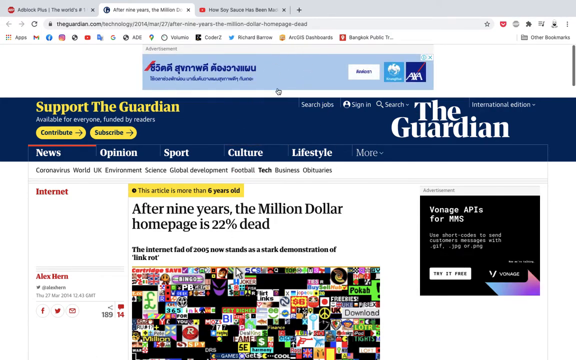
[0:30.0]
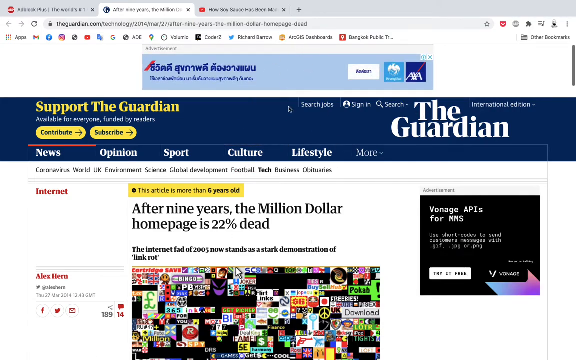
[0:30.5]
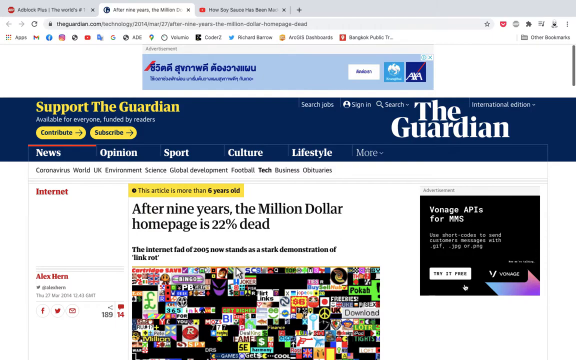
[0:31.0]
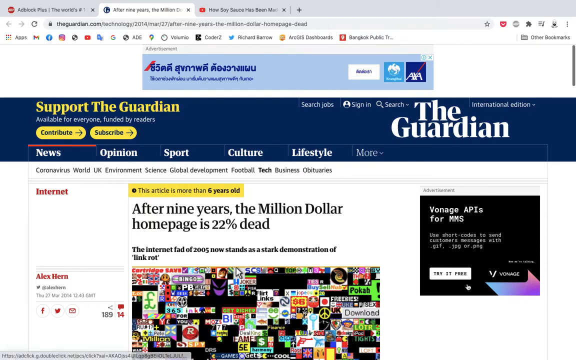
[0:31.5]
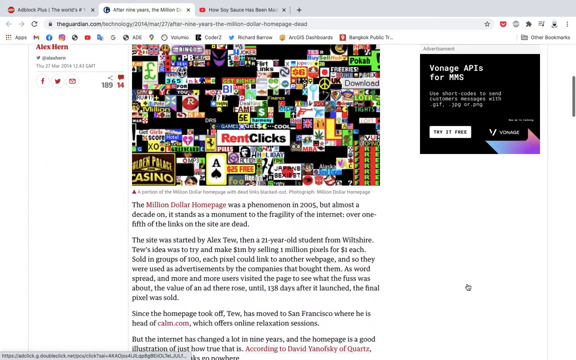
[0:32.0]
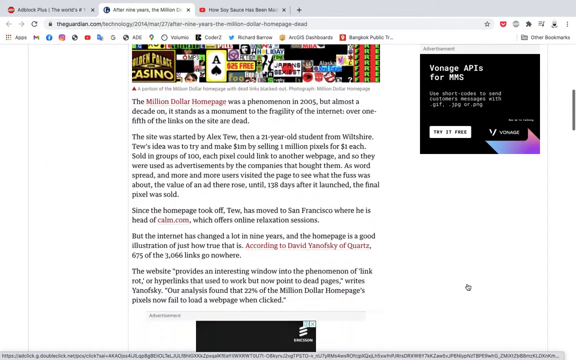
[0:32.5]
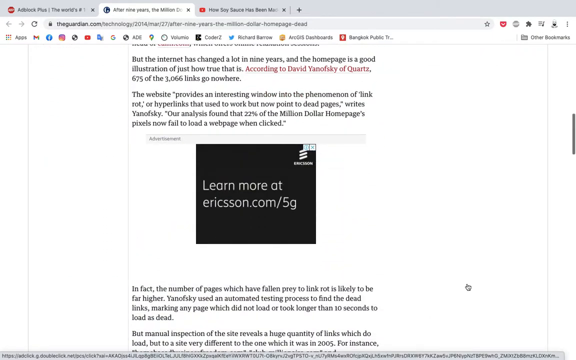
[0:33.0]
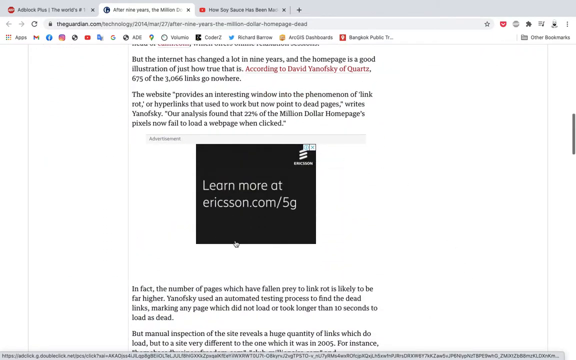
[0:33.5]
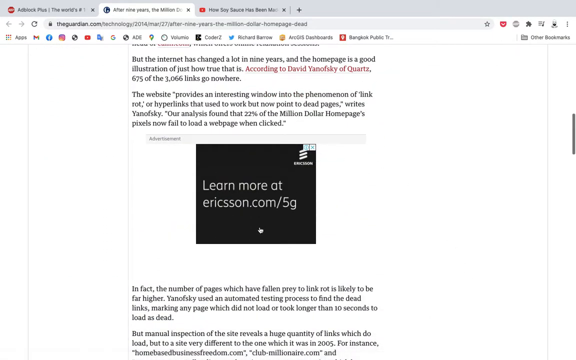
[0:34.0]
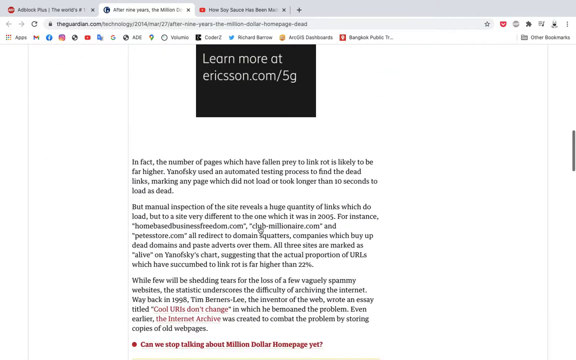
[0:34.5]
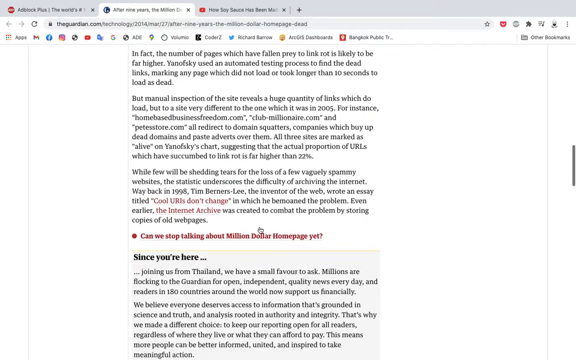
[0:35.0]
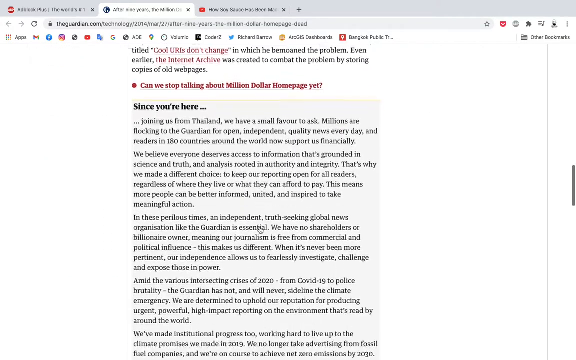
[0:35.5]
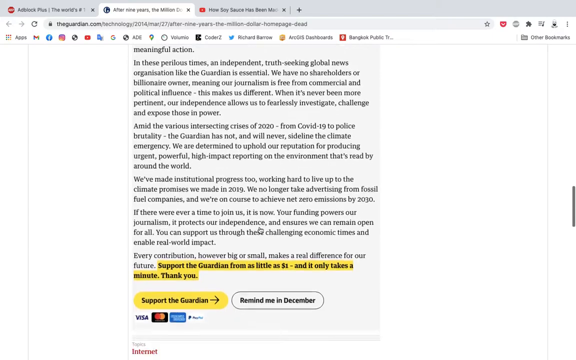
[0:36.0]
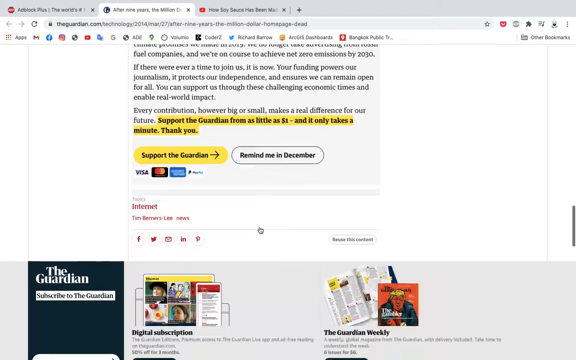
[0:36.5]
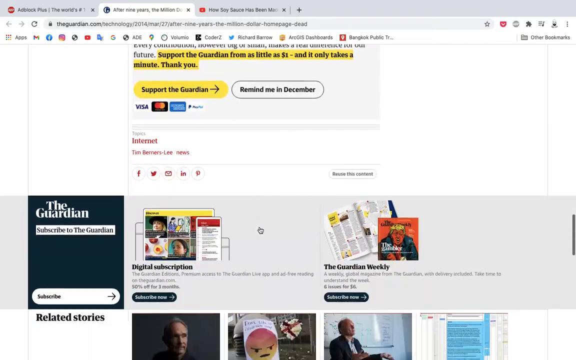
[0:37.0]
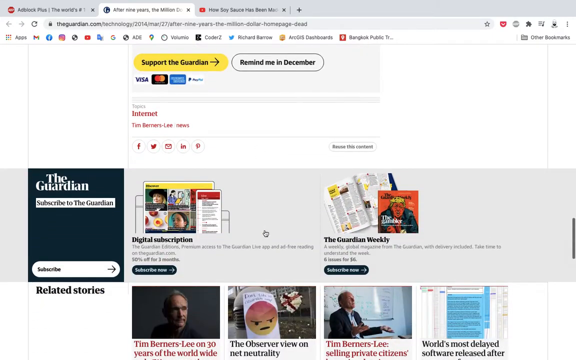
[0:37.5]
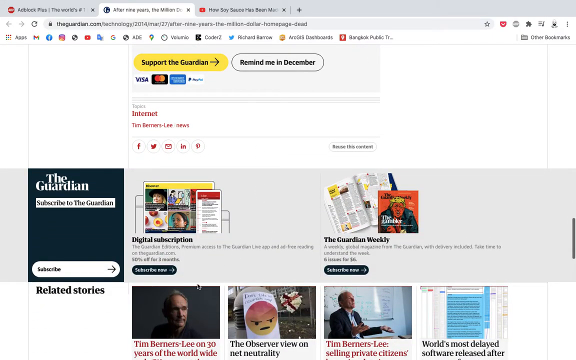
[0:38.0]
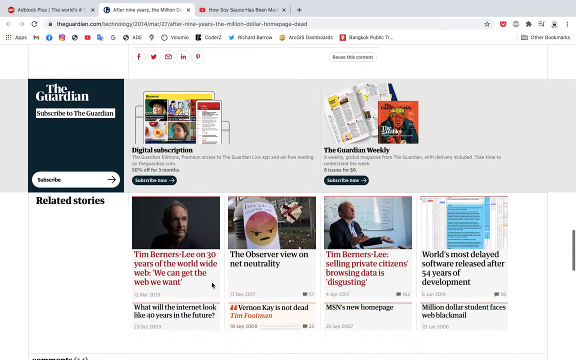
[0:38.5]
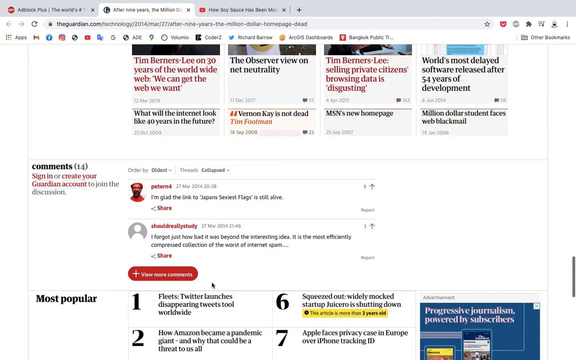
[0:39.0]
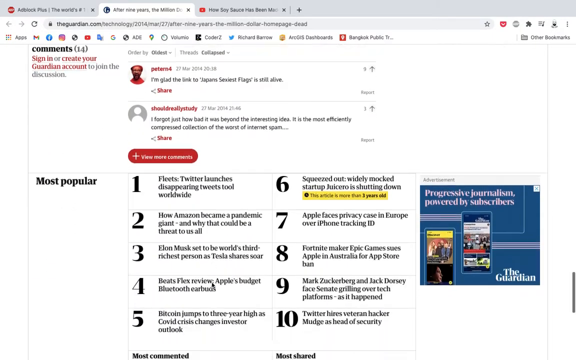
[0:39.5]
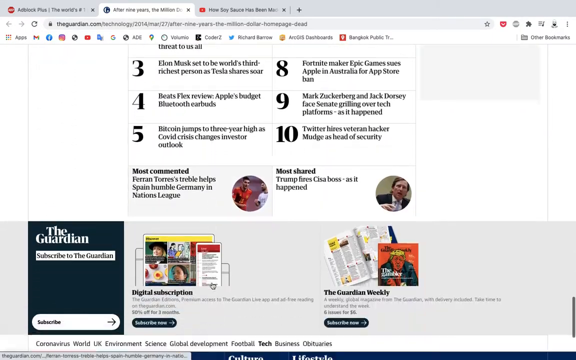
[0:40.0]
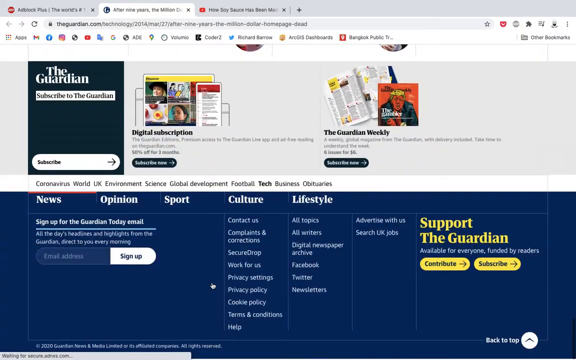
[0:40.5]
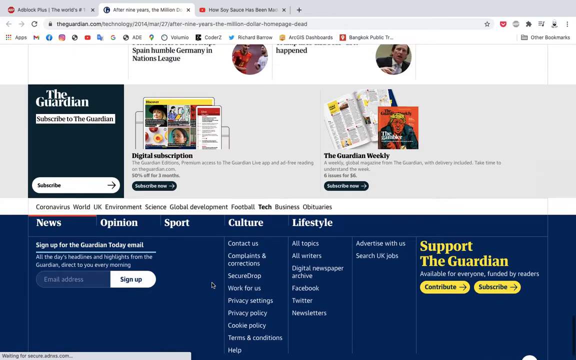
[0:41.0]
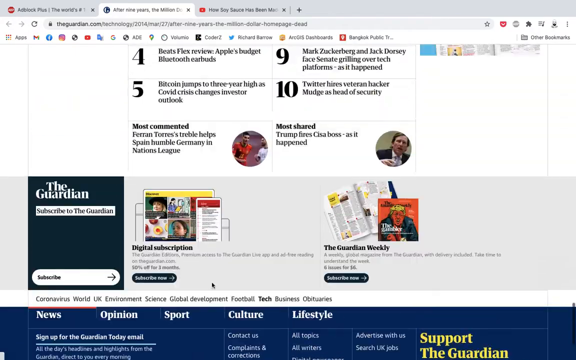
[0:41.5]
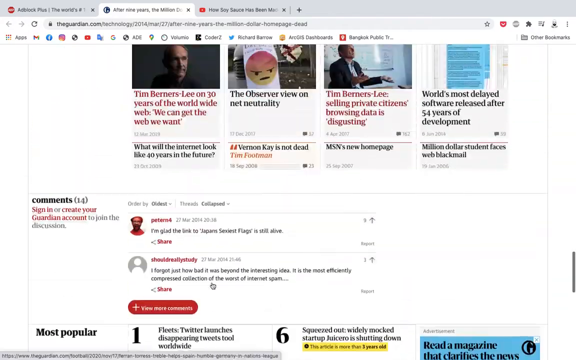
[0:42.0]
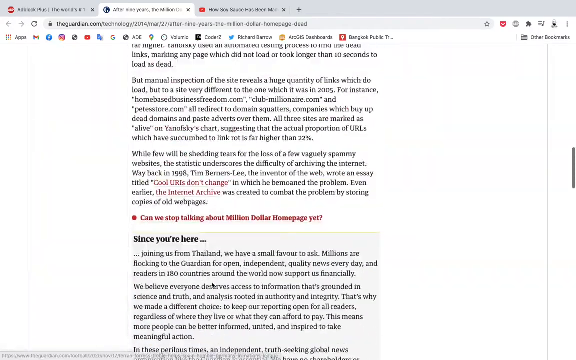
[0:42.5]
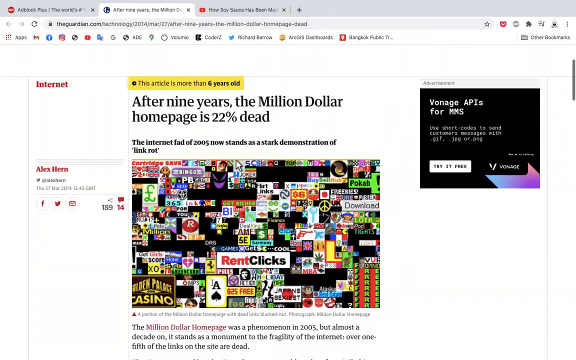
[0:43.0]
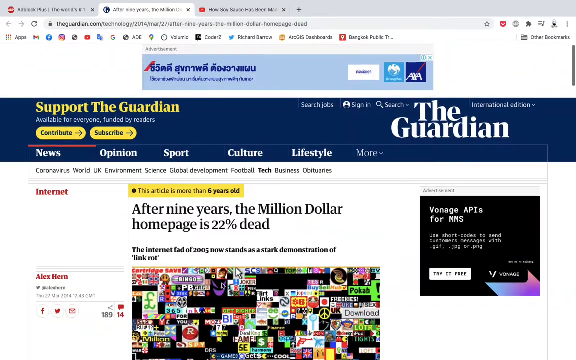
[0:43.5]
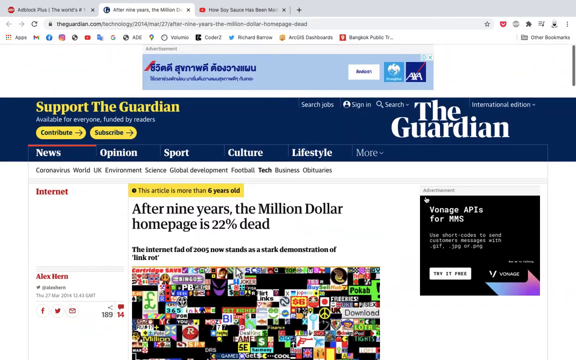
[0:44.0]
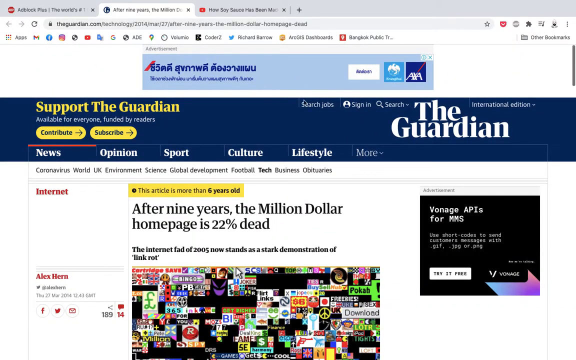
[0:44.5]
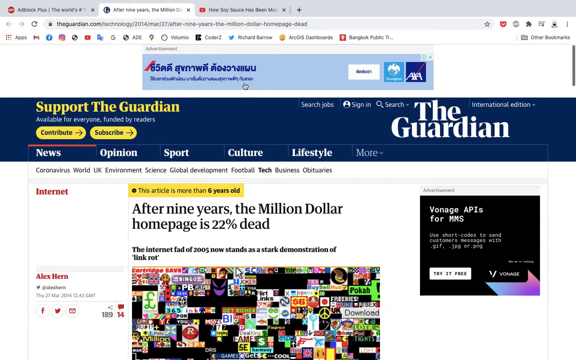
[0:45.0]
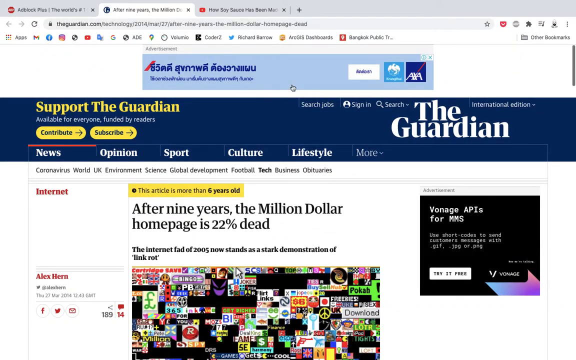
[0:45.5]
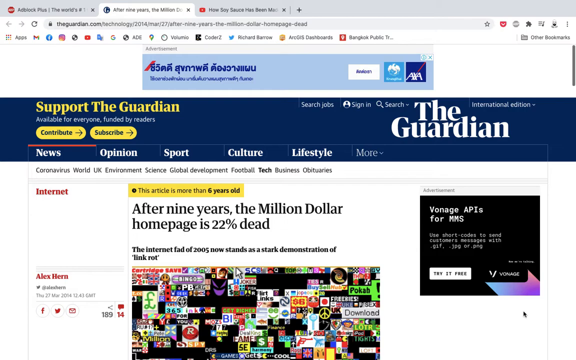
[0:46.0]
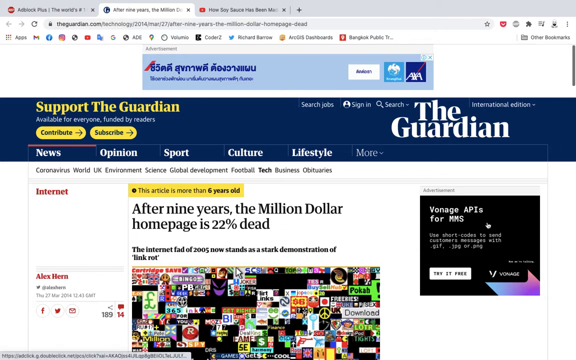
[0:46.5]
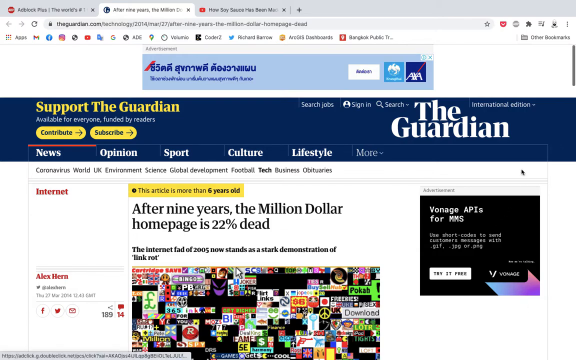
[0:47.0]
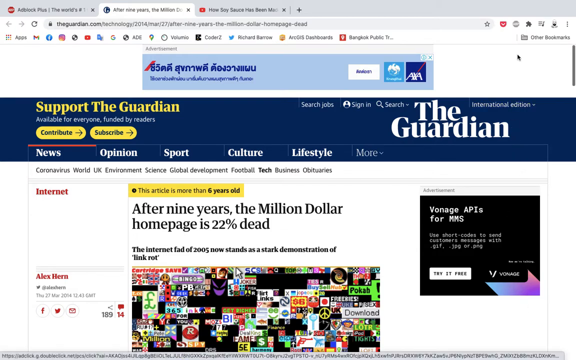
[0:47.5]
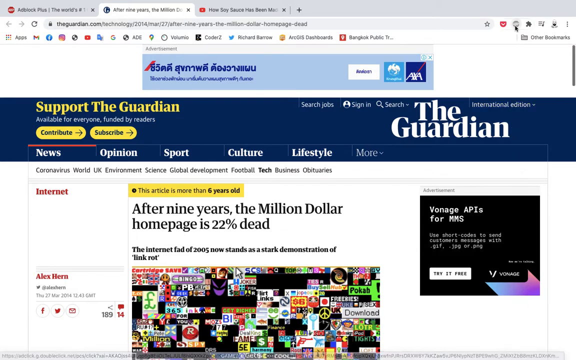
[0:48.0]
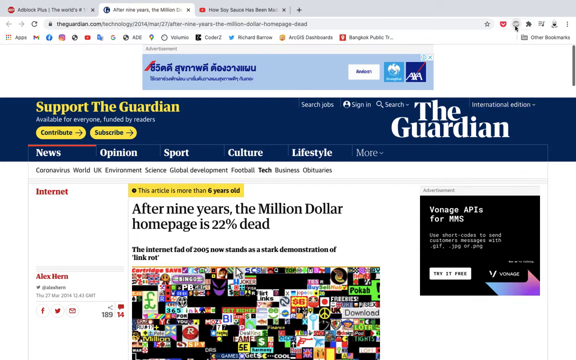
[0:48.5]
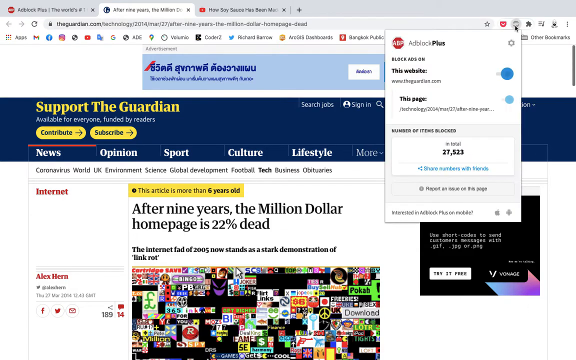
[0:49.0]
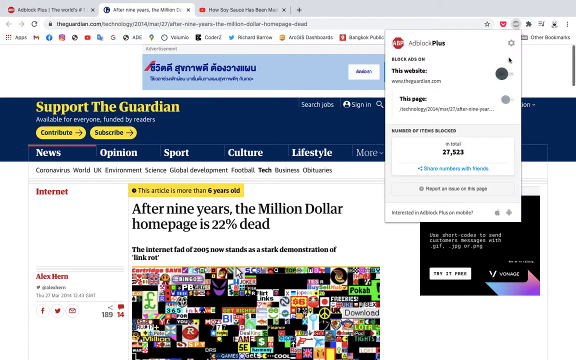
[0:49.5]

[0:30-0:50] On the Guardian website, the mouse cursor points out the advertisements and scrolls down to the bottom of the page. It scrolls back up, points out the ads again, and clicks an ad block Chrome extension in the top right of the browser. An AdBlock Plus drop-down overlay appears. It offers to block ads on this website, with a toggle switch set to on. A separate option to block ads on this page shows the page's URL, and its toggle is in a lighter shade and switched off. Below, the number of items blocked on the page is shown as 27,523, with an option in blue to share this number with friends. Underneath is a final option with a cog icon to report an issue on this page. At the very bottom of the dialog box is the text "interested in AdBlock Plus on mobile" along with the Apple and Android logos.